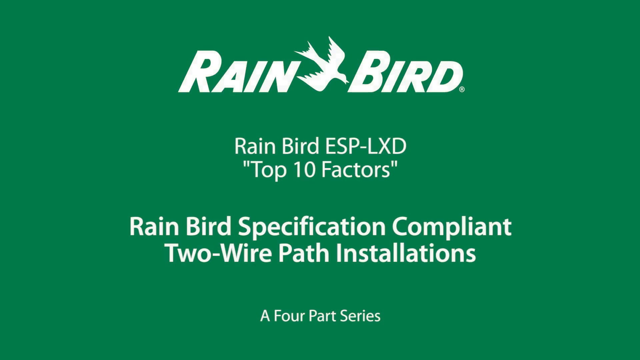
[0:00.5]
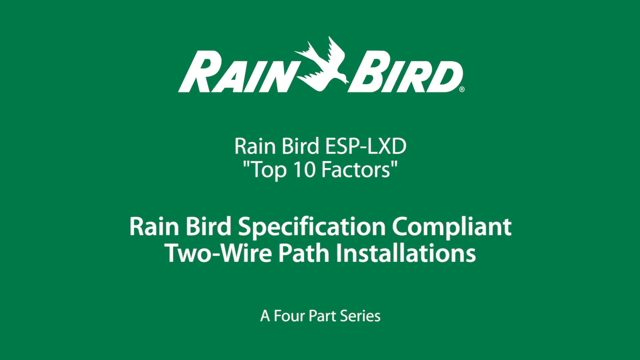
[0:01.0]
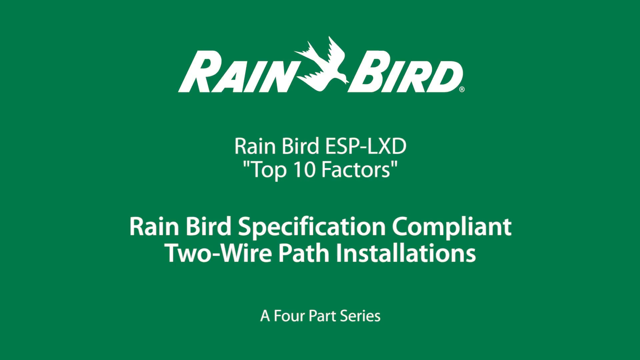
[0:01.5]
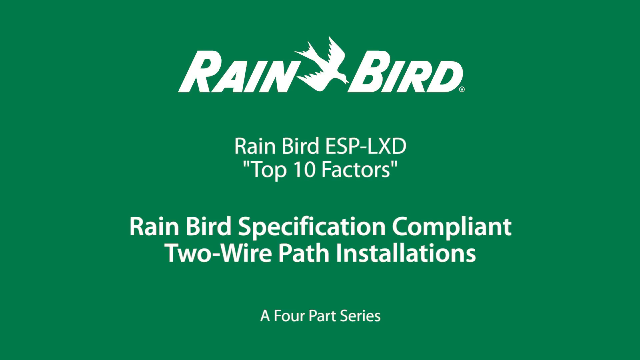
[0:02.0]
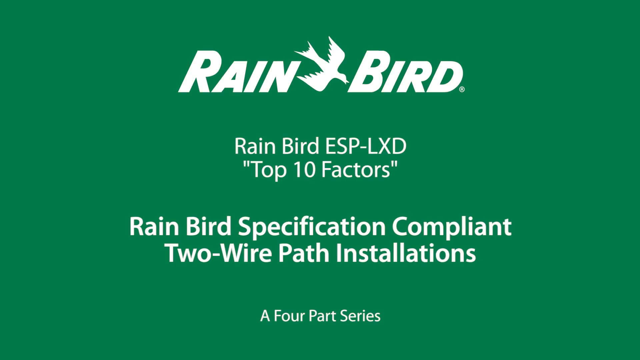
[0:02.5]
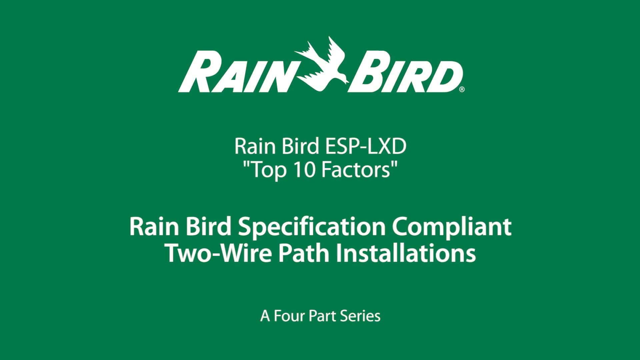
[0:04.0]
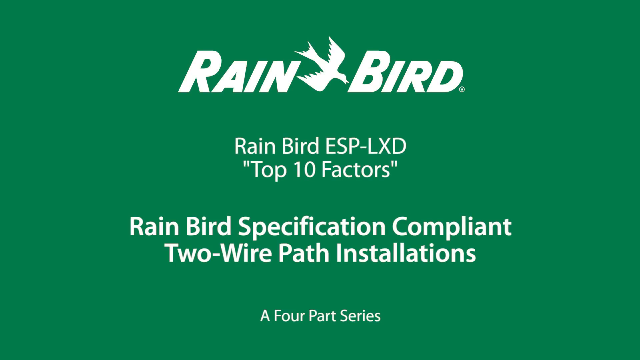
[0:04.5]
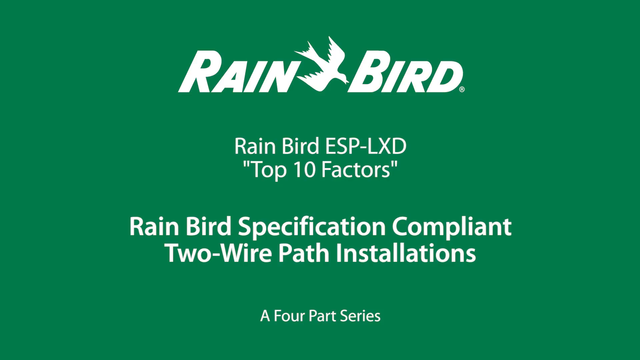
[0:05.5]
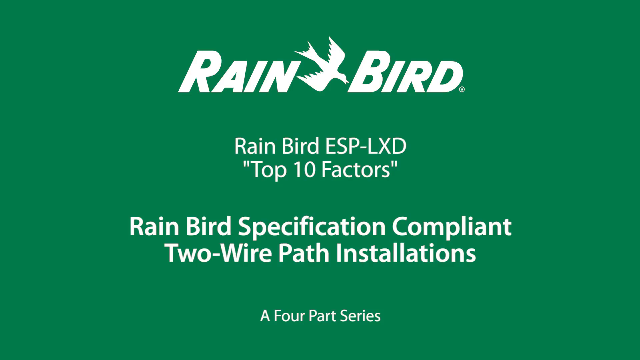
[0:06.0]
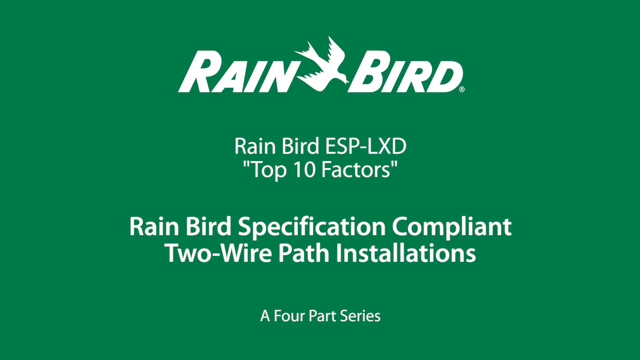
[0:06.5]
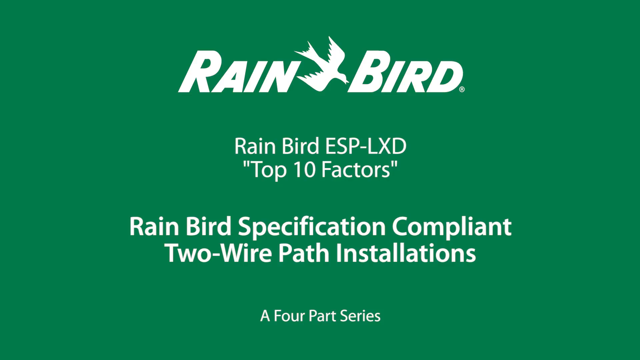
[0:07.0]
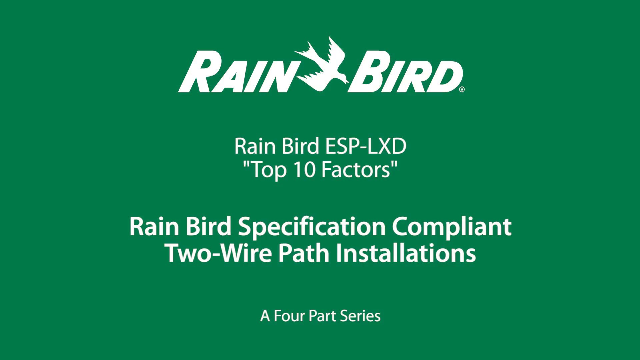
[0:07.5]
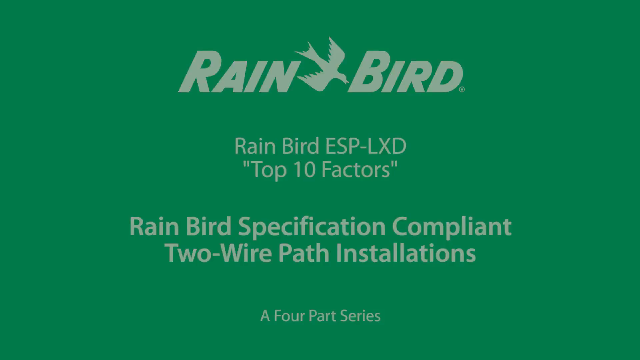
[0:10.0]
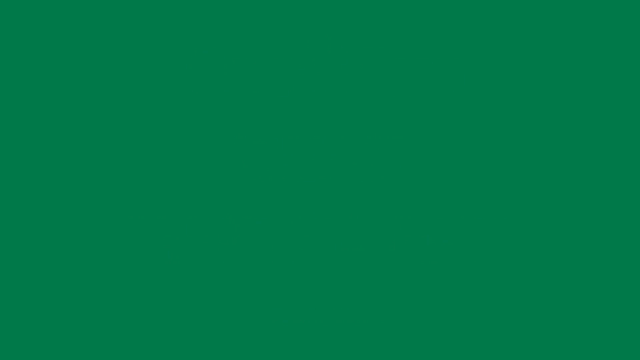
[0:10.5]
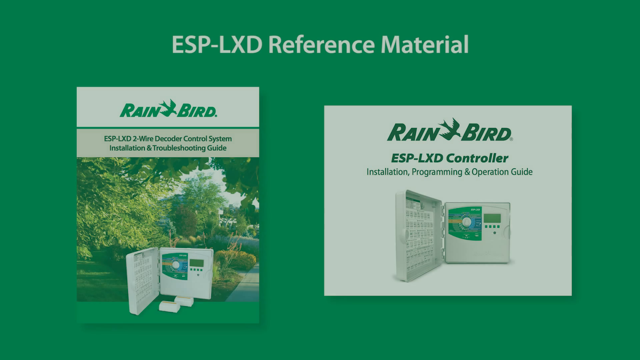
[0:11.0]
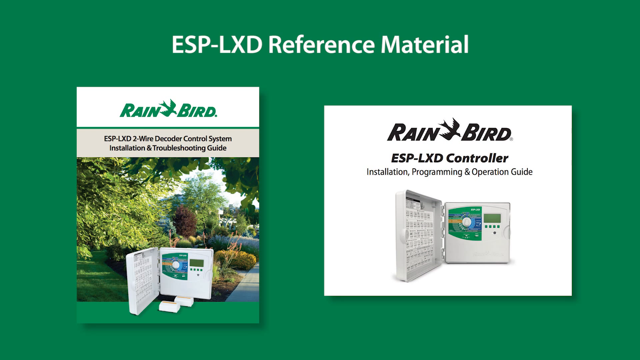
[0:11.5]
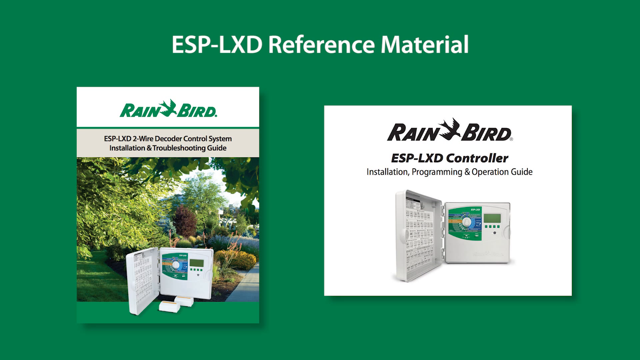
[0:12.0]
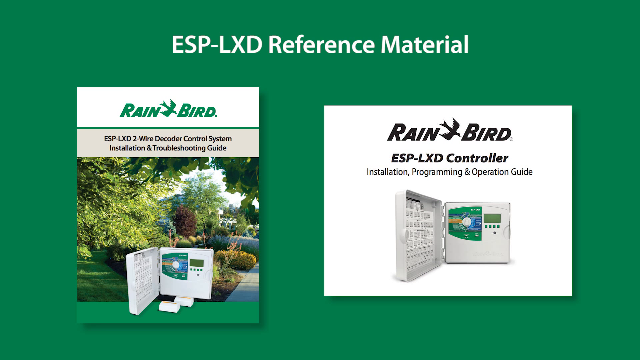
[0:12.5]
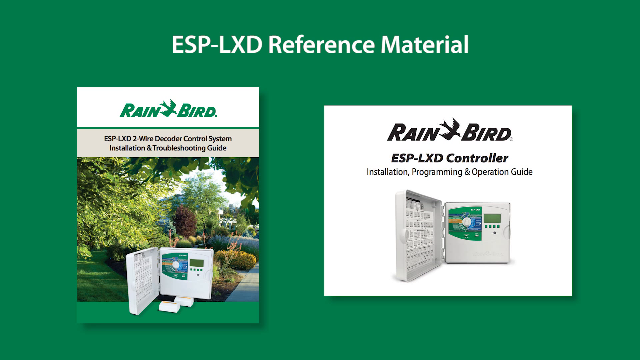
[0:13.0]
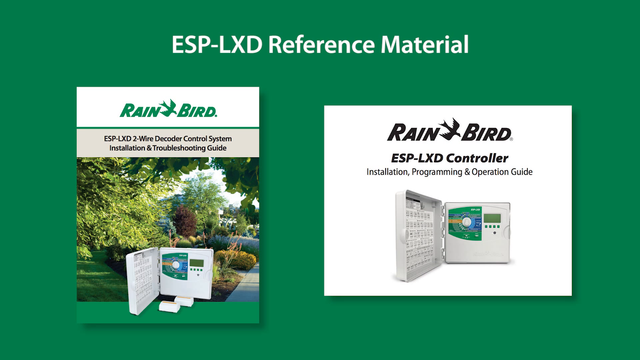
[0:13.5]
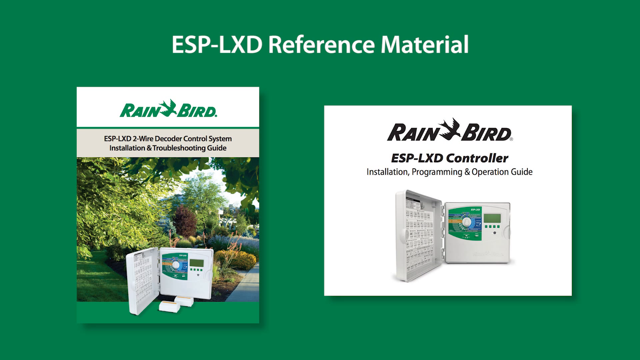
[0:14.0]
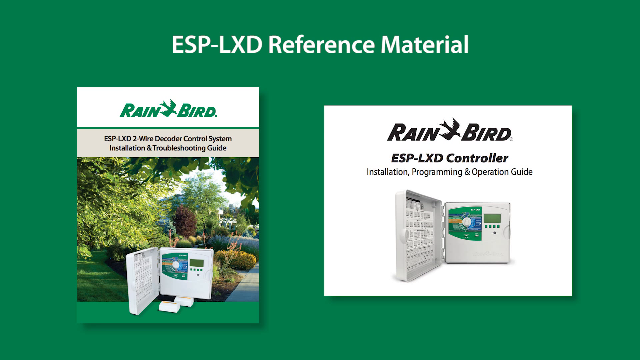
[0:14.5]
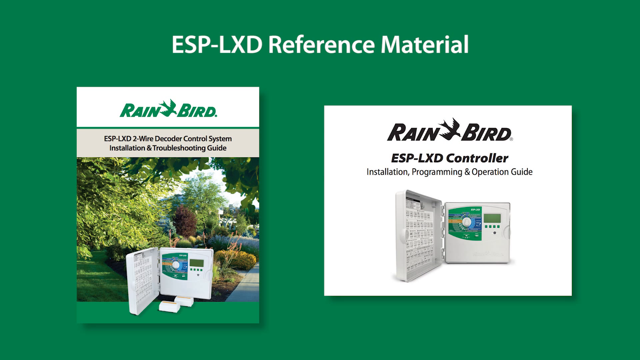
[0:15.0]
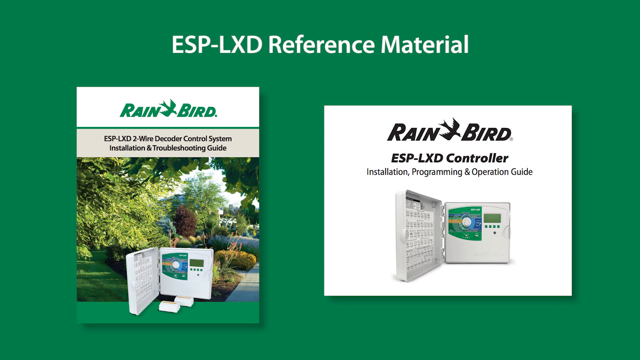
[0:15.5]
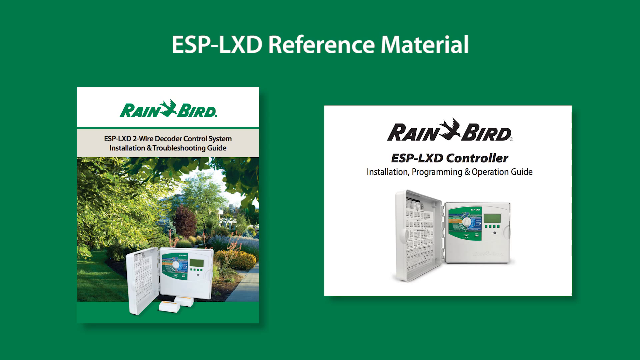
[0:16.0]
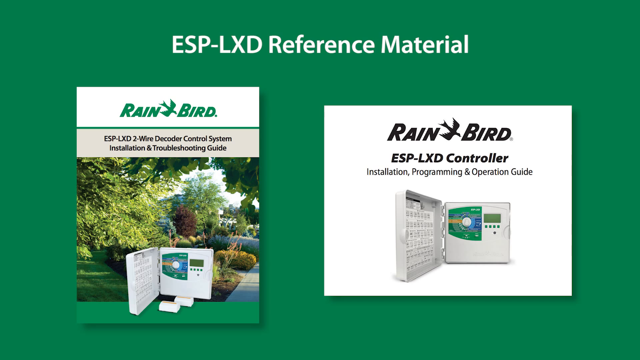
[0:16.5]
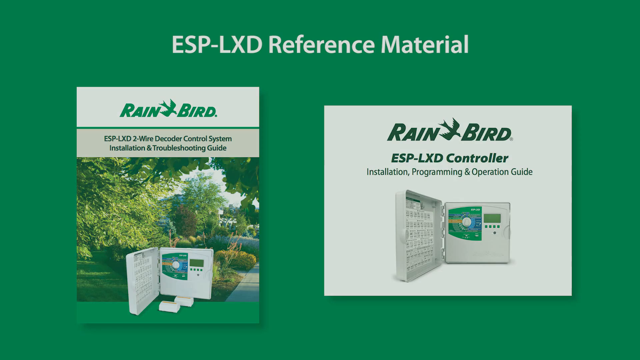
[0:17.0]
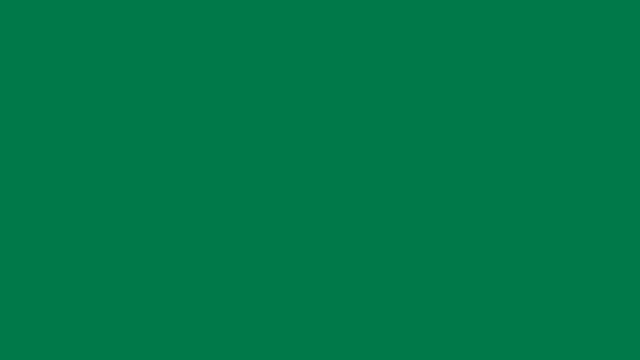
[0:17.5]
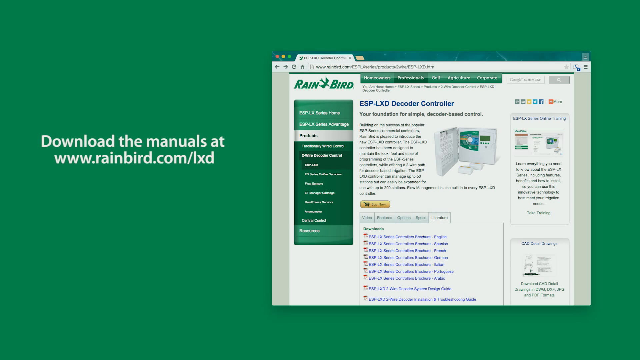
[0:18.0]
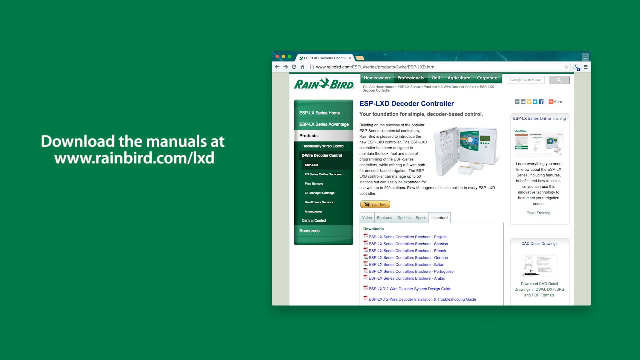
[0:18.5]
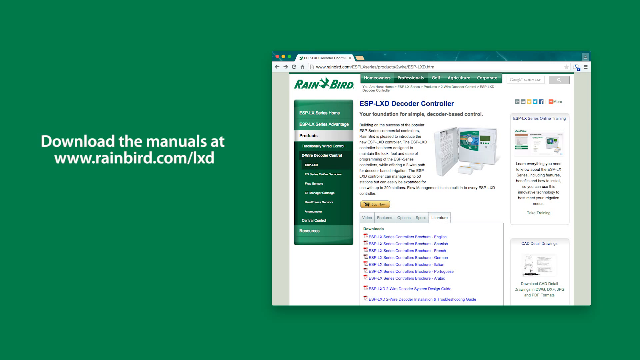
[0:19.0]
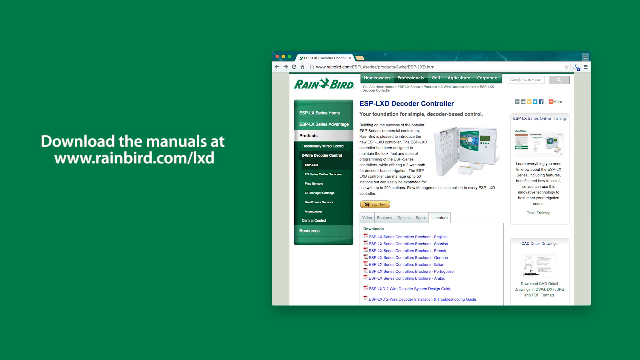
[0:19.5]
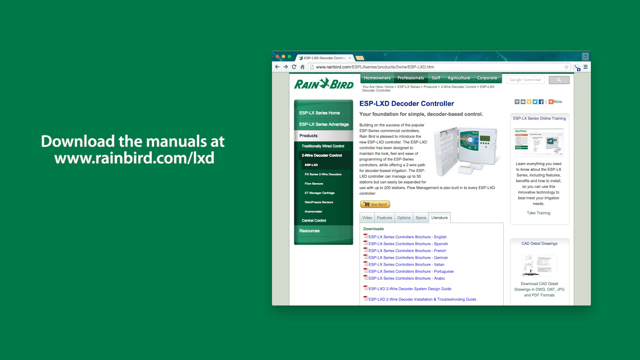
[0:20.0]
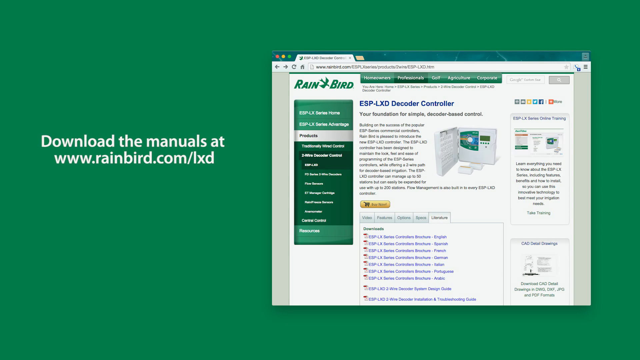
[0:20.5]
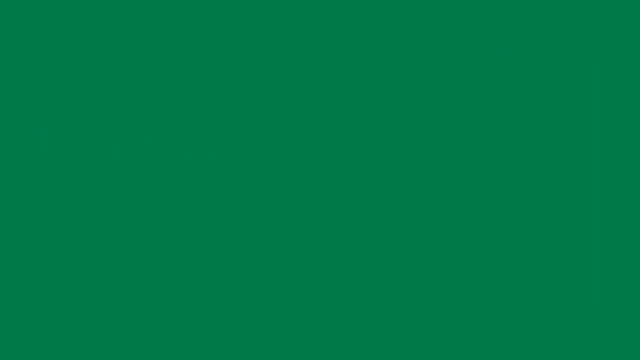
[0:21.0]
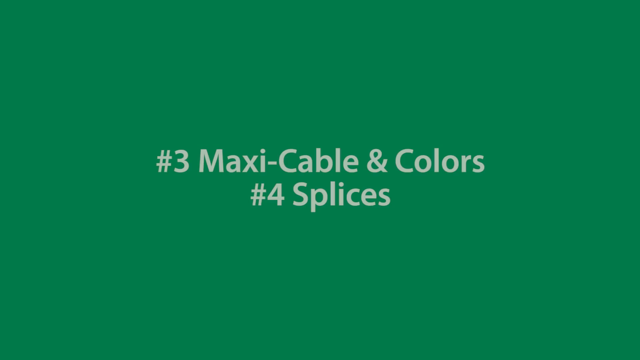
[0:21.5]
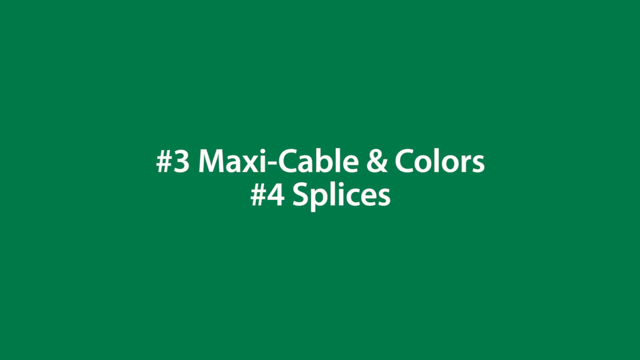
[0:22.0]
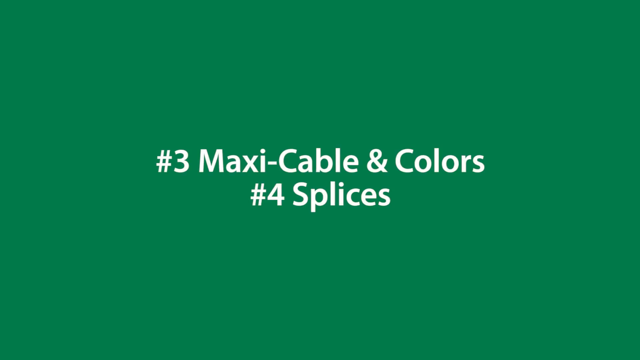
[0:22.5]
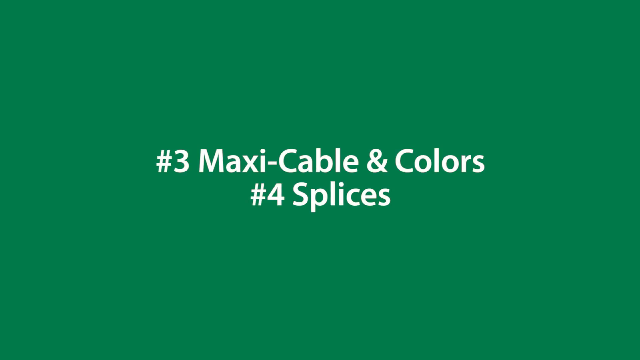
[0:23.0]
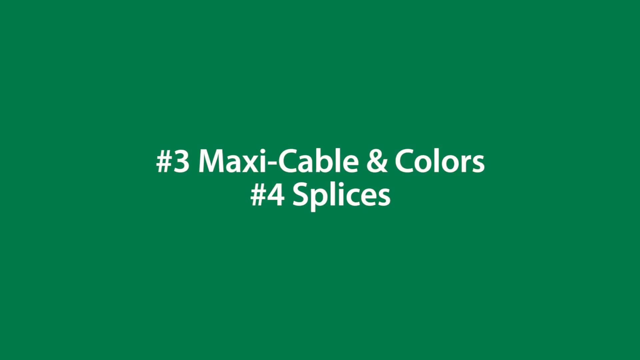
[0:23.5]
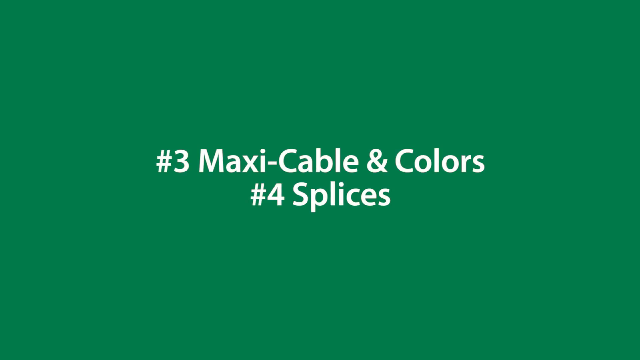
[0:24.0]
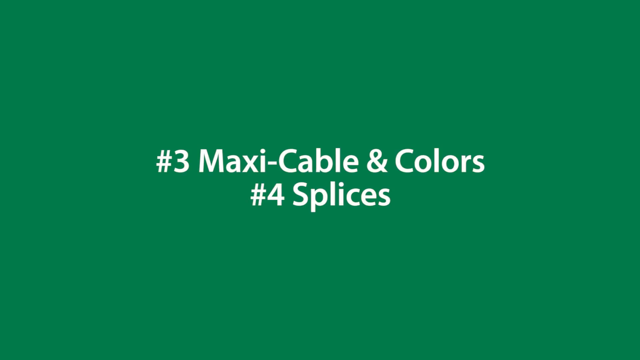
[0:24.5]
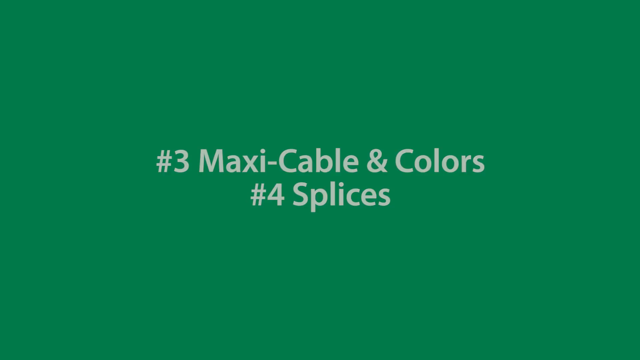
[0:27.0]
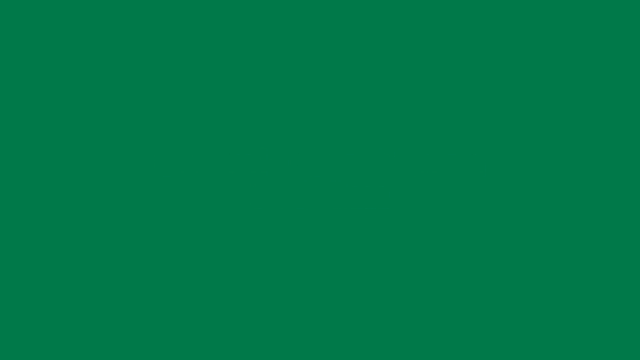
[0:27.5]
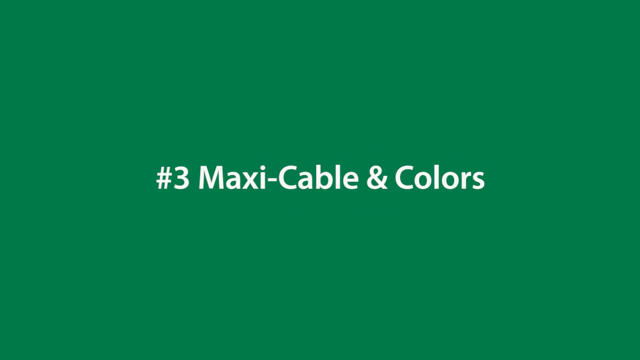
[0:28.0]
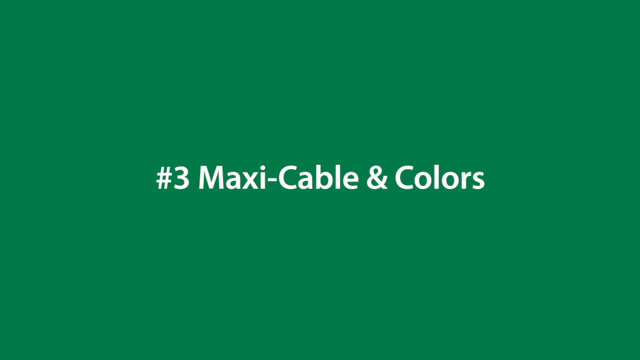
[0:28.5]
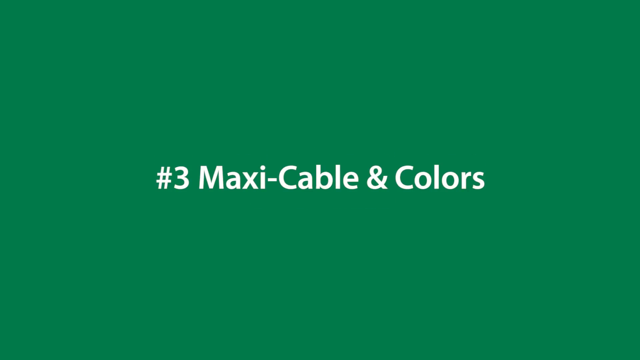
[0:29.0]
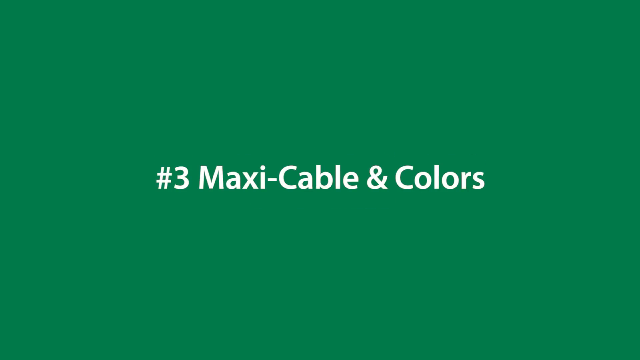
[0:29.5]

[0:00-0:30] The video opens on a green background with white text reading "rain bird" alongside a logo of a bird in flight. Text then reads "Rainbird ESP-LXD Top 10 Factors" in quotation marks, followed by "Rainbird specification compliant, two-wire path installations, a four-part series." The next screen, also on a green background, reads "ESP-LXD reference manual." An image on the left side of the screen says "Rain Bird" with the bird-in-flight logo and "ESP LXD two-wire decoder control system installation and troubleshooting guide." It shows a landscaping scene with trees, shrubbery, grass and mulch, a walkway at the bottom right, and beyond that what looks like wildflowers, perhaps. There is also a machine: a keypad with a hinged, closed door cover and a dial. On the control pad is a little window with four buttons under it, and a white dial set on a green background carries a series of numbers and letters. On the inside of the door is a sticker with text.